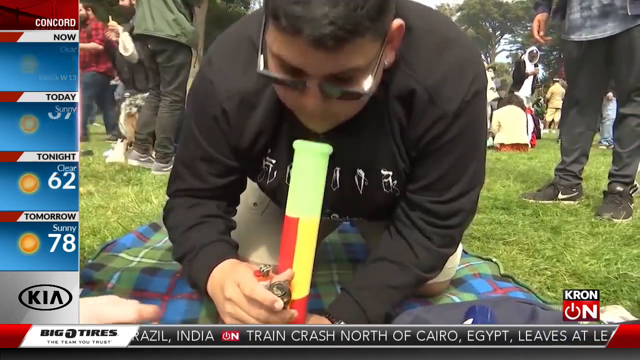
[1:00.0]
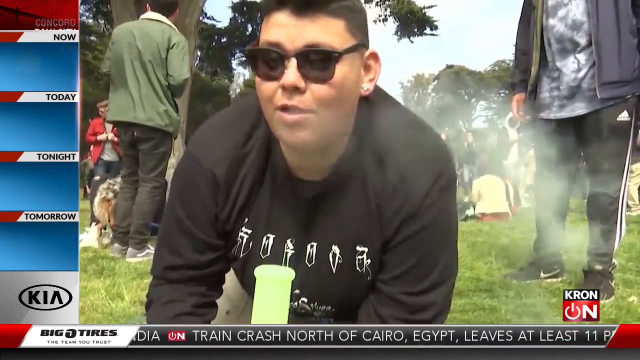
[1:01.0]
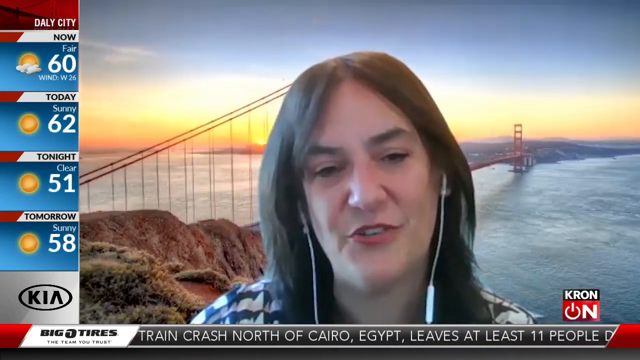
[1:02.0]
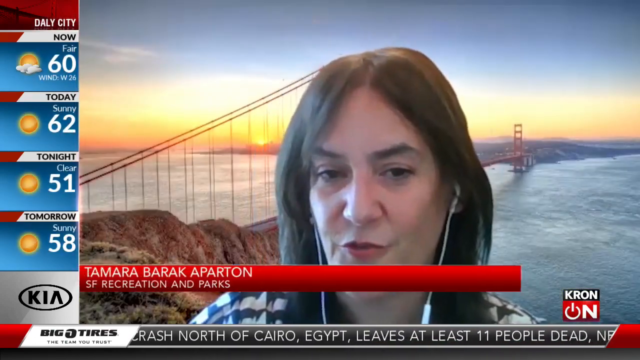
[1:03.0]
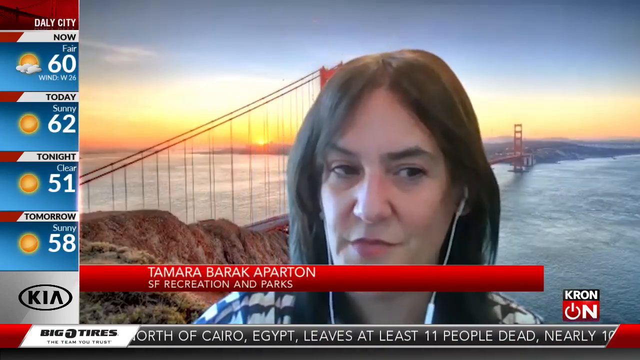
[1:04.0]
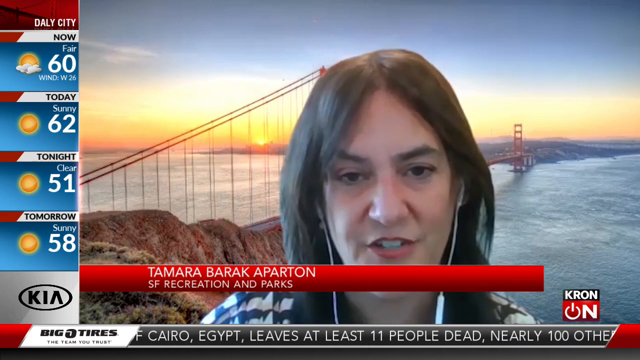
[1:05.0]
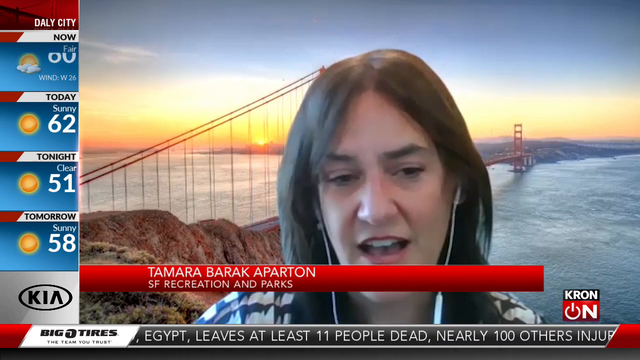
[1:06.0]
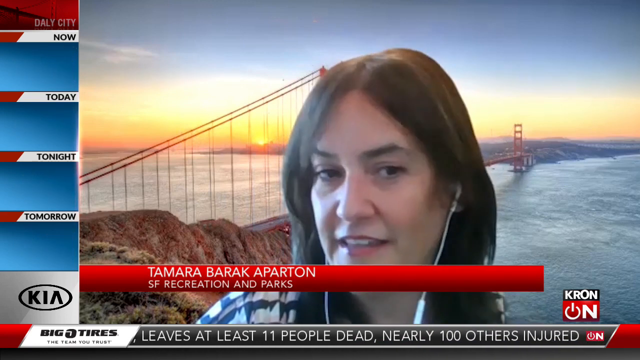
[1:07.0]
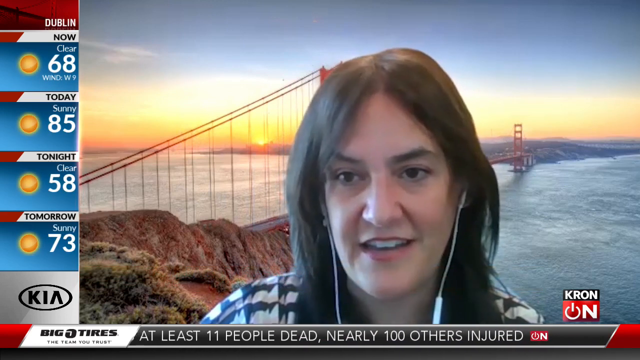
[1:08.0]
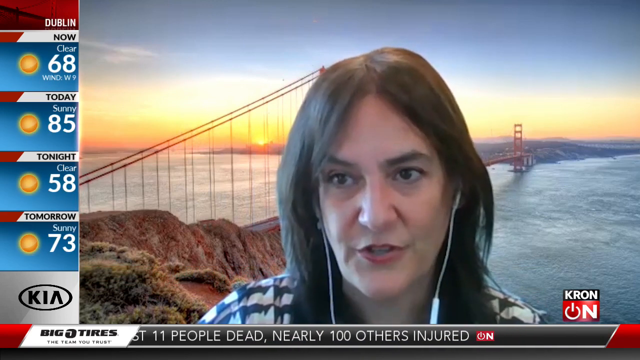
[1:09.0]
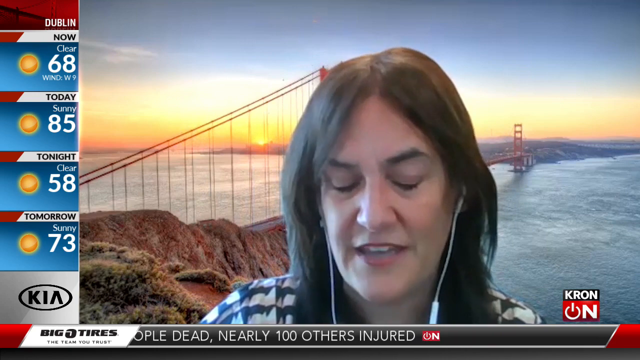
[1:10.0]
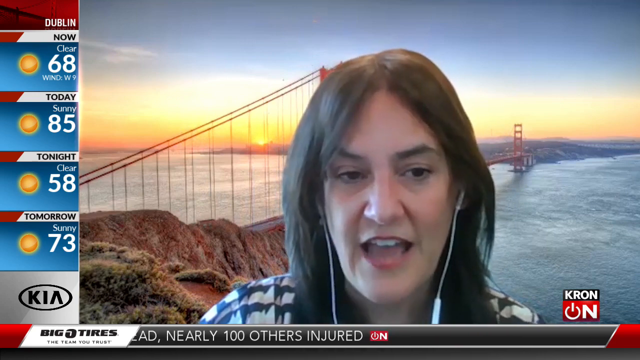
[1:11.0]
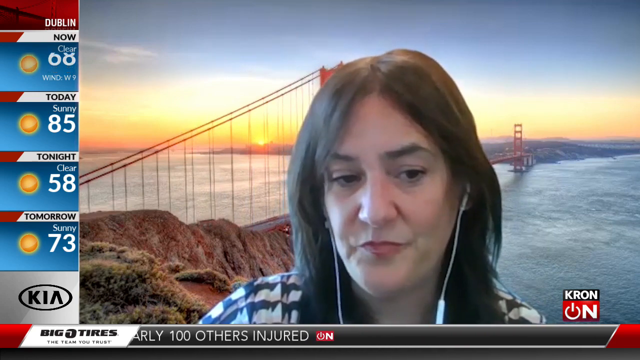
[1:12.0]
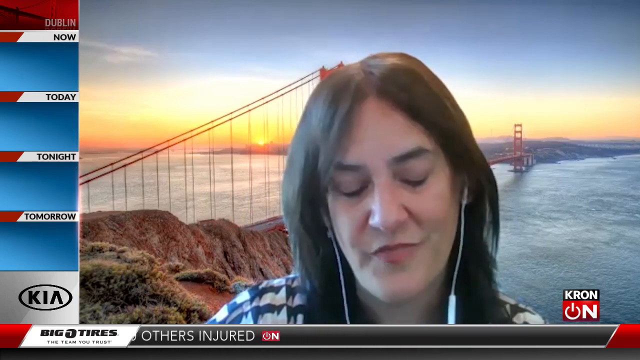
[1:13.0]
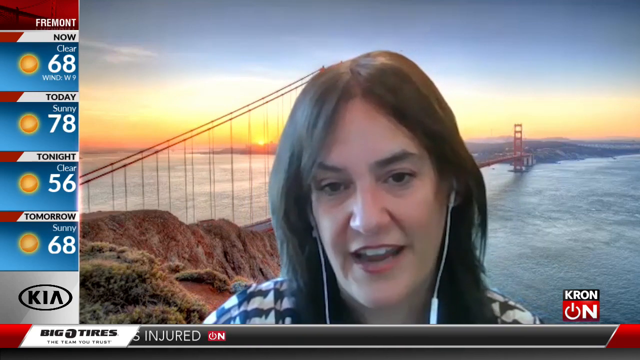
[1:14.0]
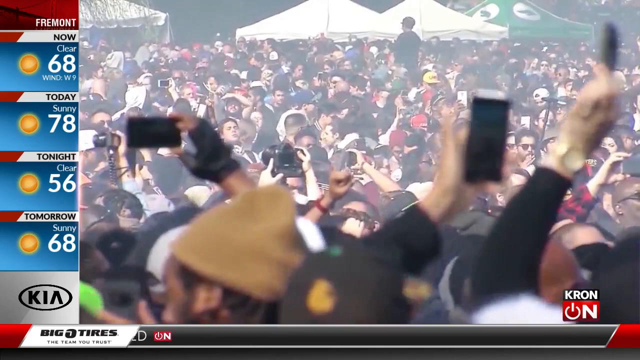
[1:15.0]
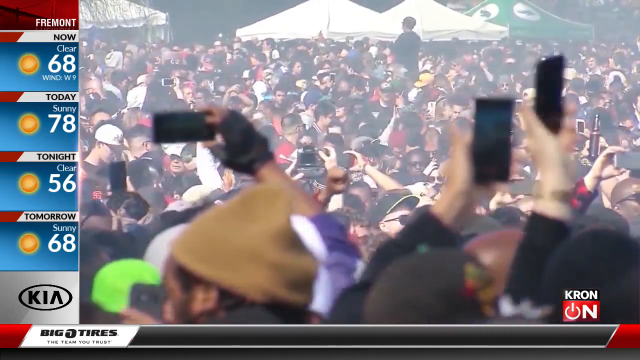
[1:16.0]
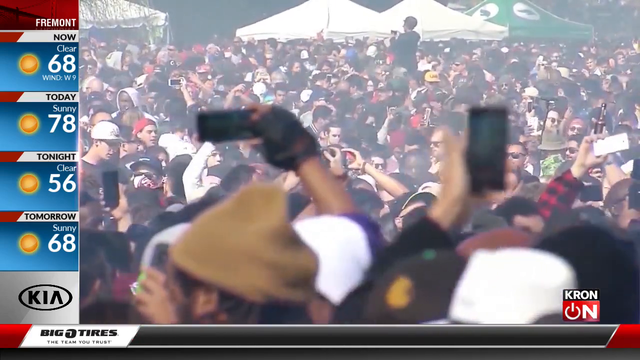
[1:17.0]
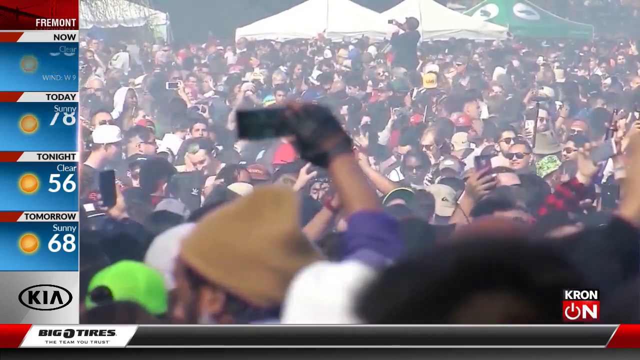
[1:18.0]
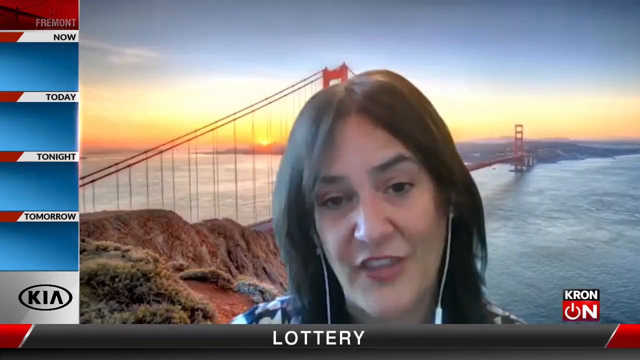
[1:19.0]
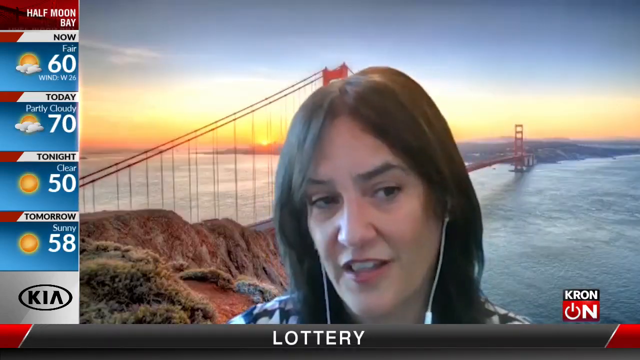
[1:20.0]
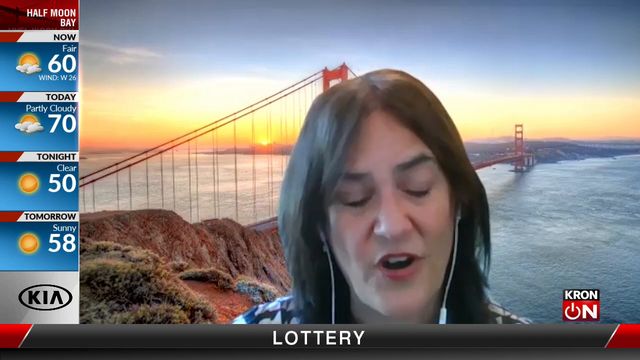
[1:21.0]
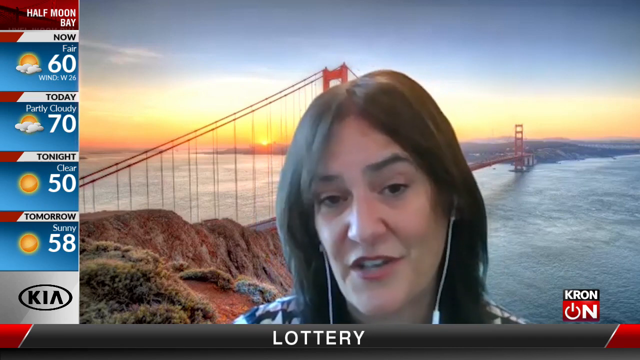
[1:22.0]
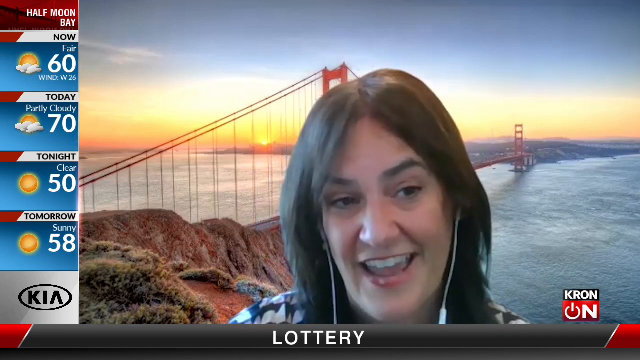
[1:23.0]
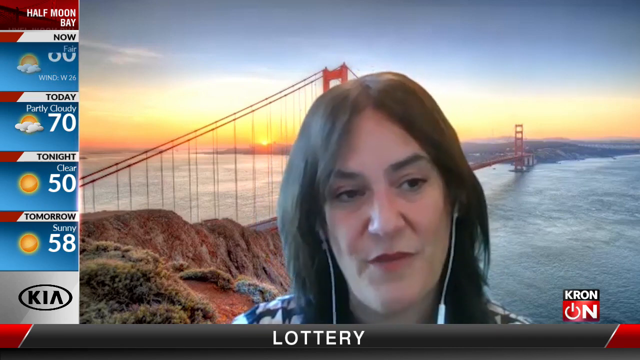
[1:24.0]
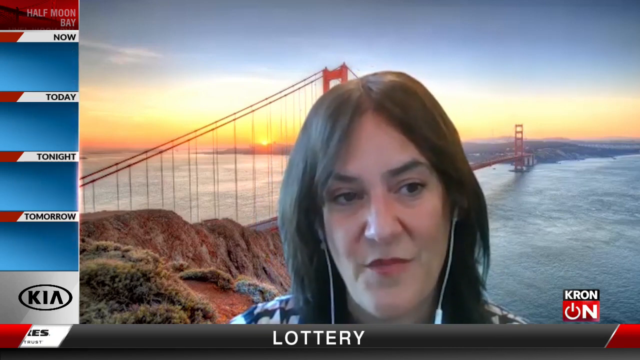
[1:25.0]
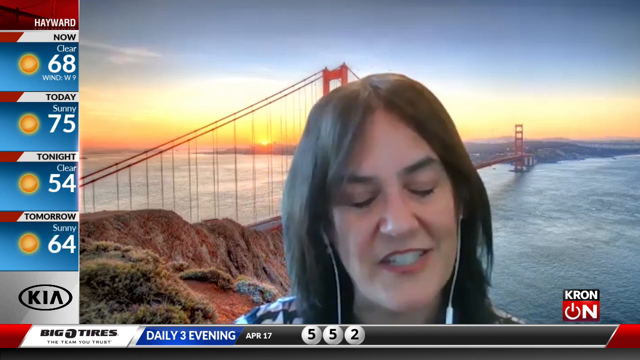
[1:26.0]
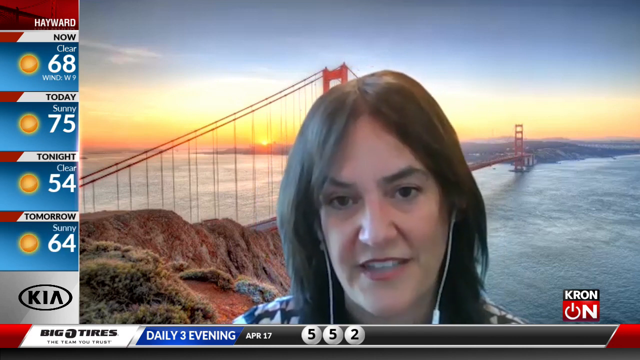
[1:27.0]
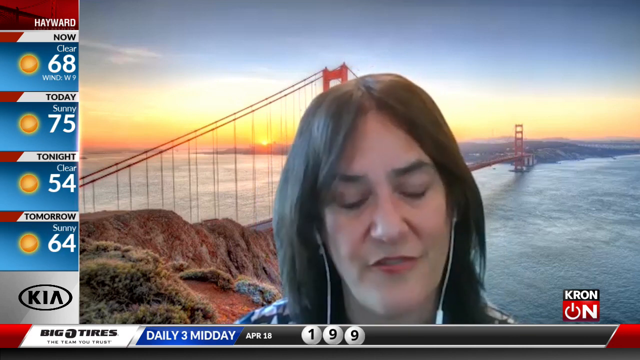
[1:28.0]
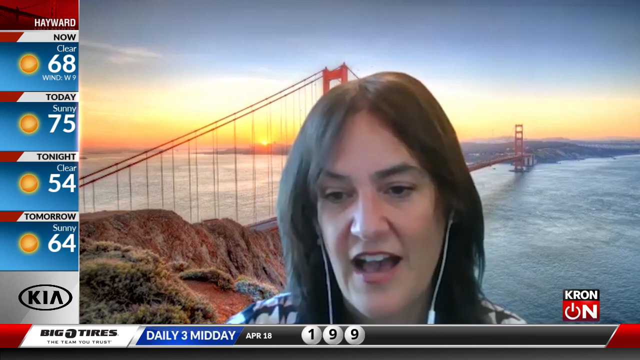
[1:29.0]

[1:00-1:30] A man wearing a black sweater and shades is smoking. A woman with her earphones on is also shown. Another shot shows people who appear to be of mixed race, carrying their phones and seemingly attending the event. On the side of the screen, temperatures from different towns are displayed for night, day and week.